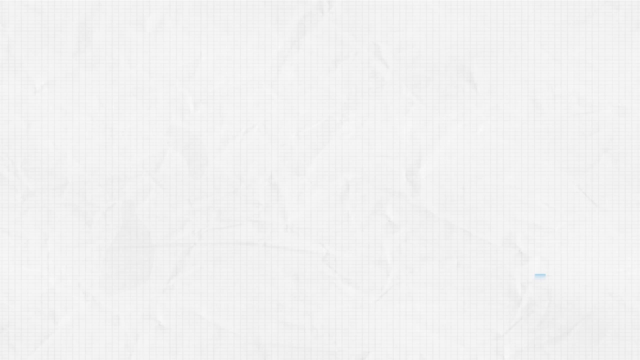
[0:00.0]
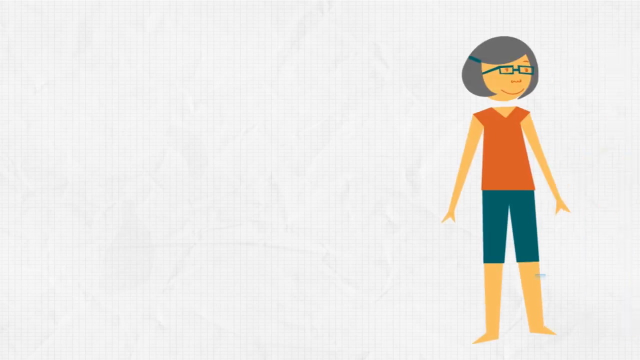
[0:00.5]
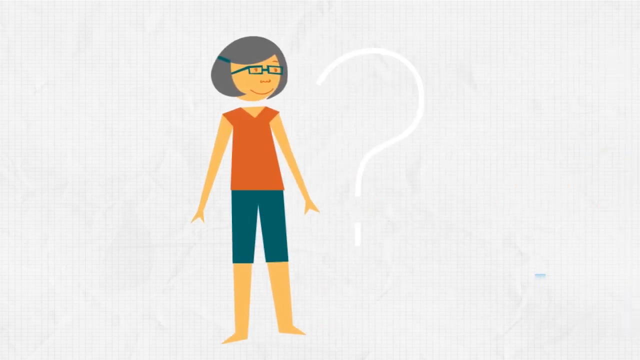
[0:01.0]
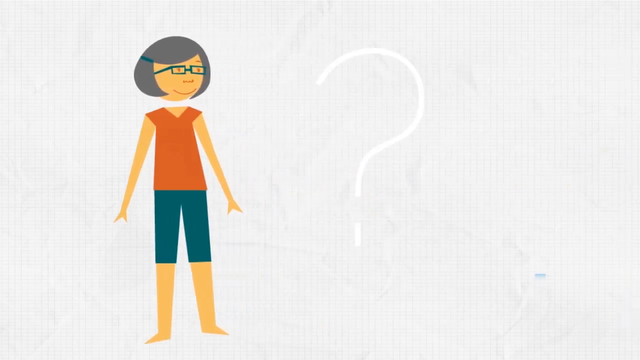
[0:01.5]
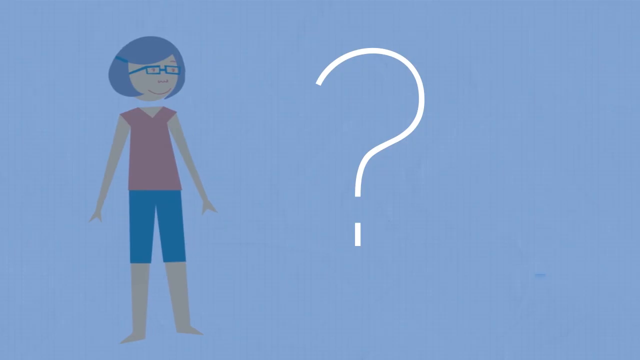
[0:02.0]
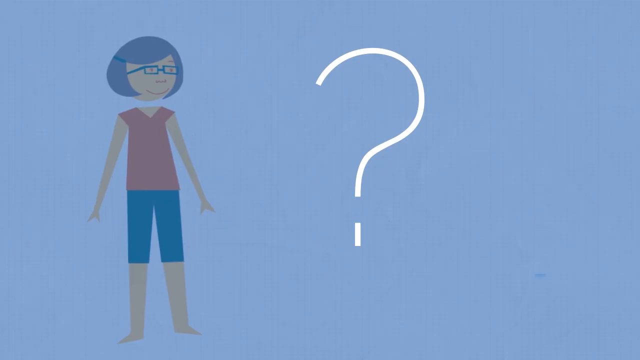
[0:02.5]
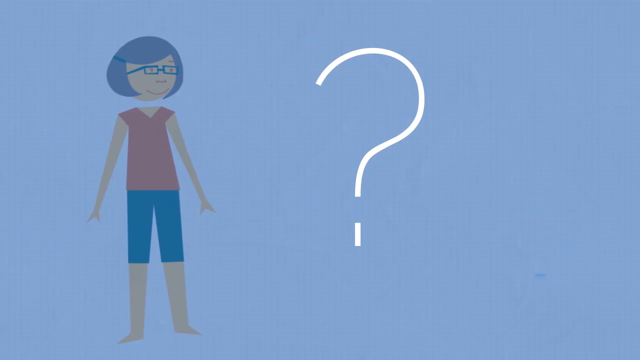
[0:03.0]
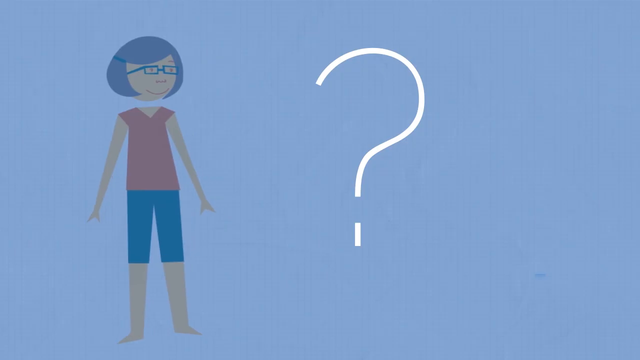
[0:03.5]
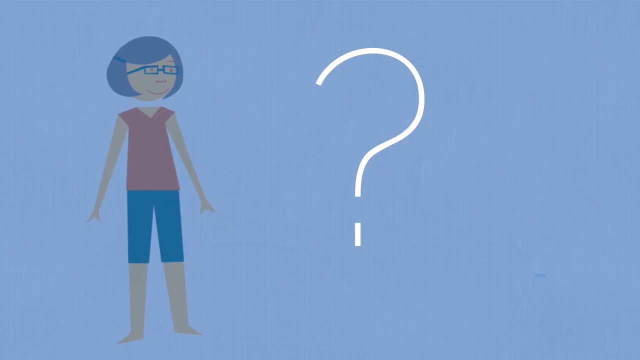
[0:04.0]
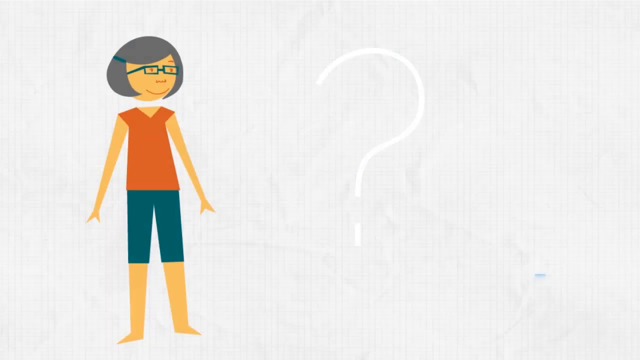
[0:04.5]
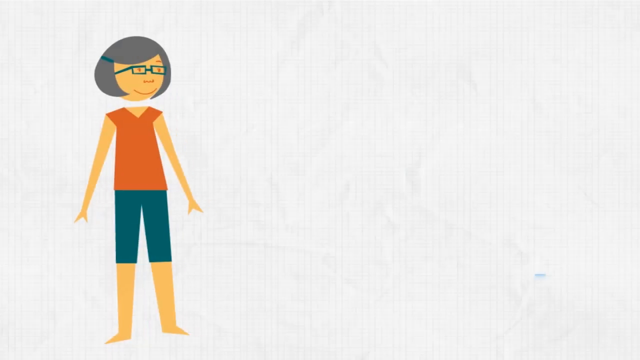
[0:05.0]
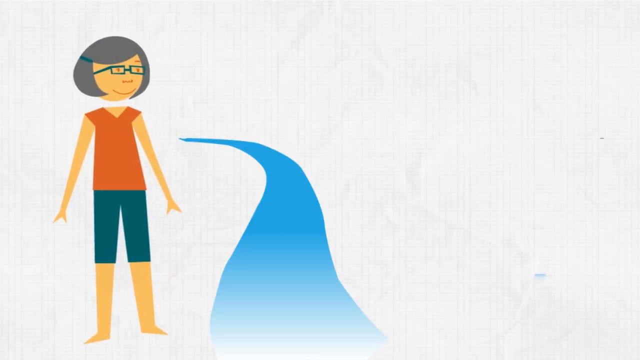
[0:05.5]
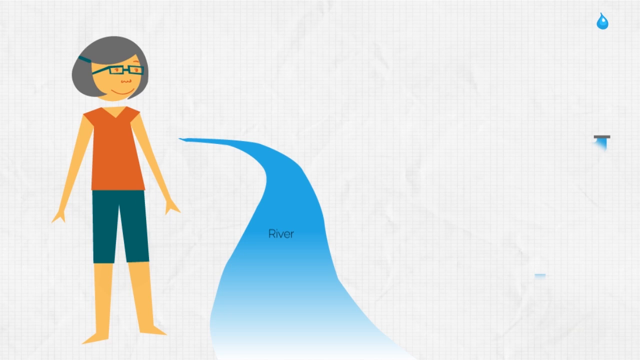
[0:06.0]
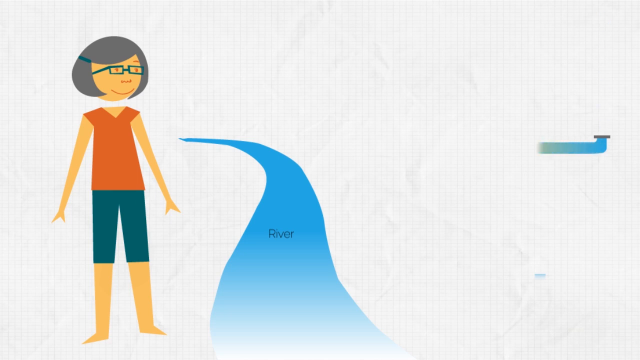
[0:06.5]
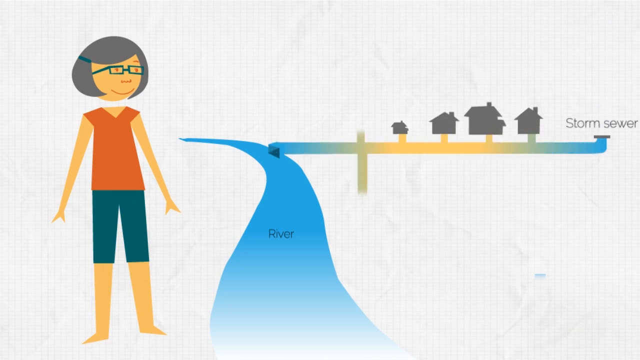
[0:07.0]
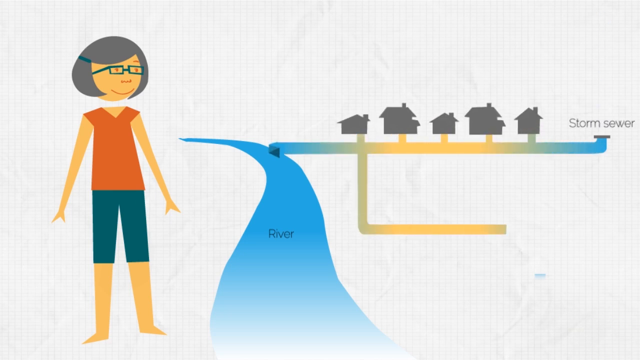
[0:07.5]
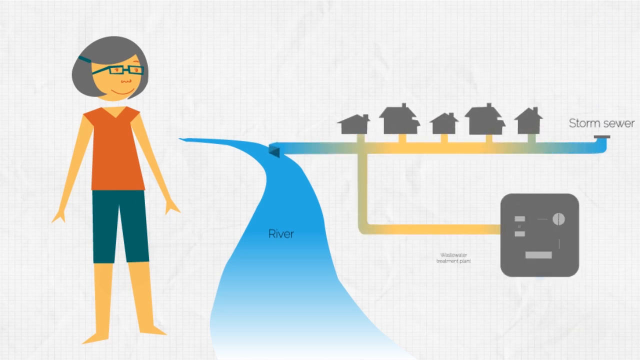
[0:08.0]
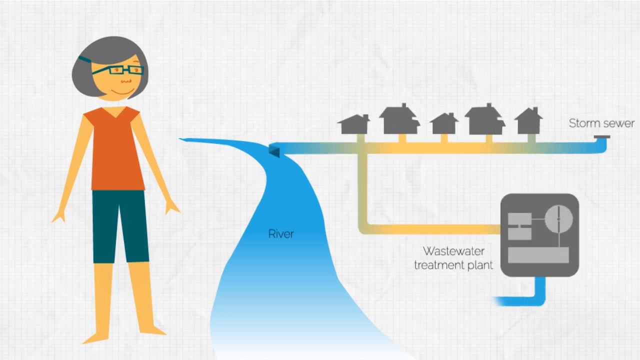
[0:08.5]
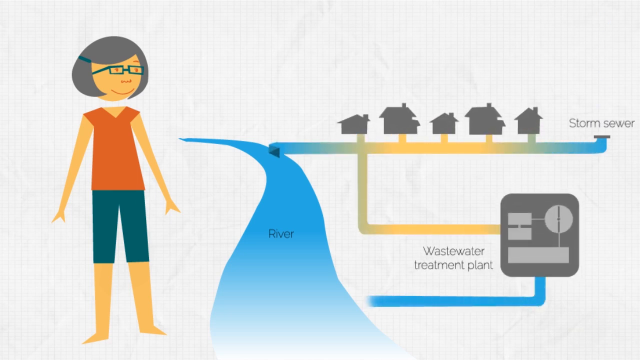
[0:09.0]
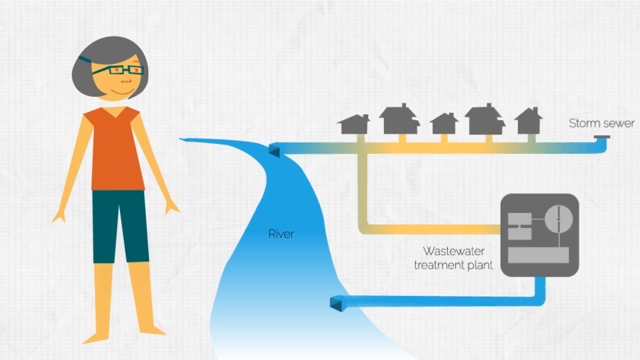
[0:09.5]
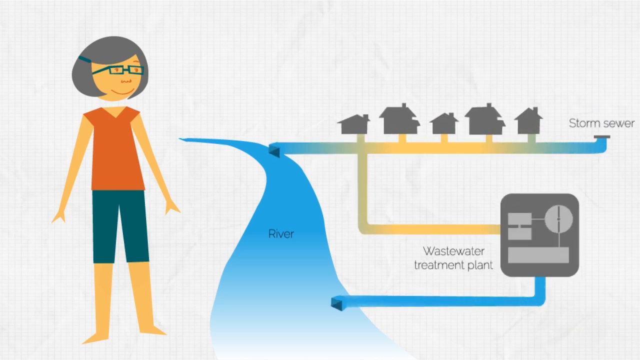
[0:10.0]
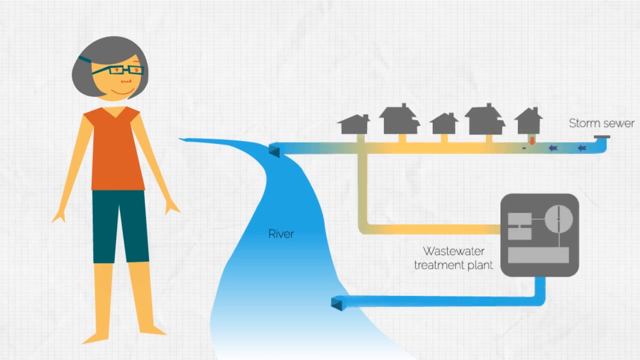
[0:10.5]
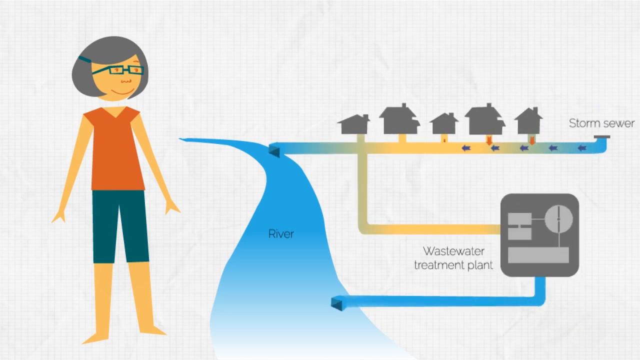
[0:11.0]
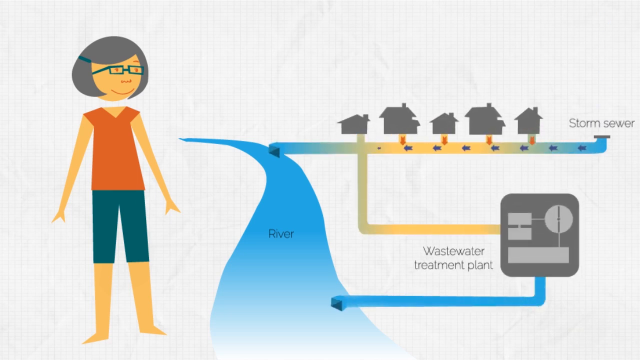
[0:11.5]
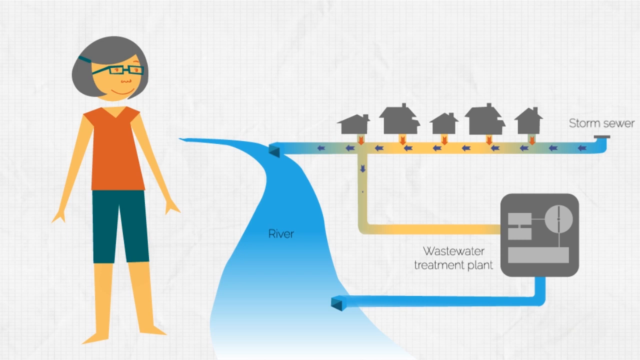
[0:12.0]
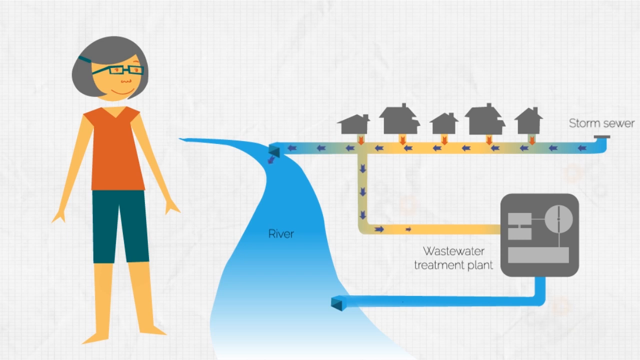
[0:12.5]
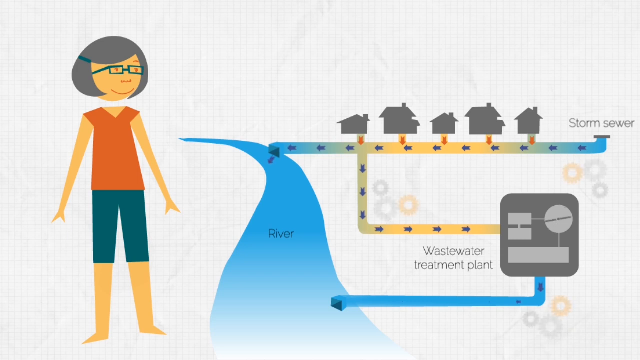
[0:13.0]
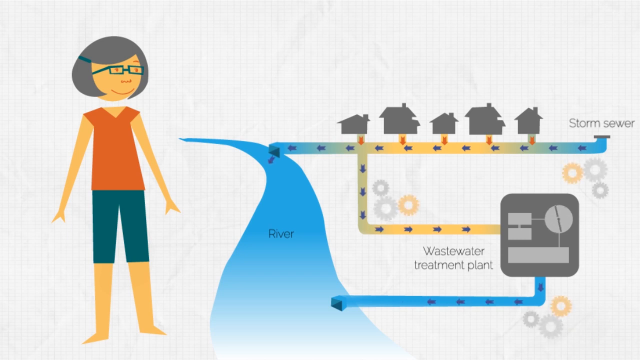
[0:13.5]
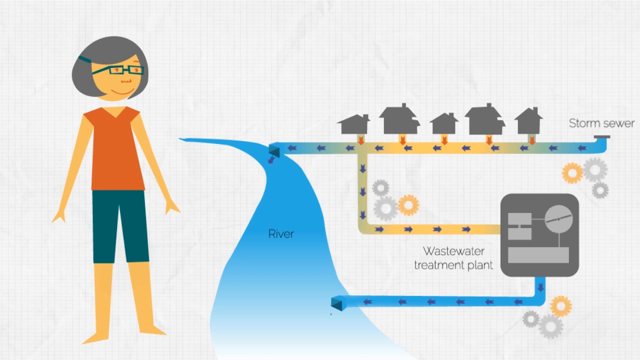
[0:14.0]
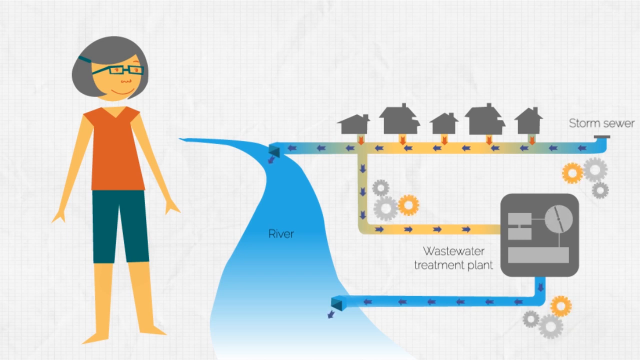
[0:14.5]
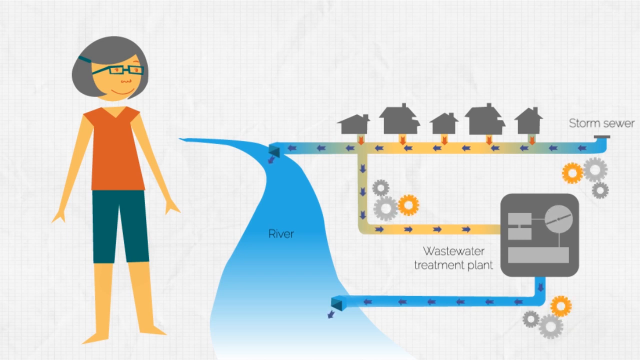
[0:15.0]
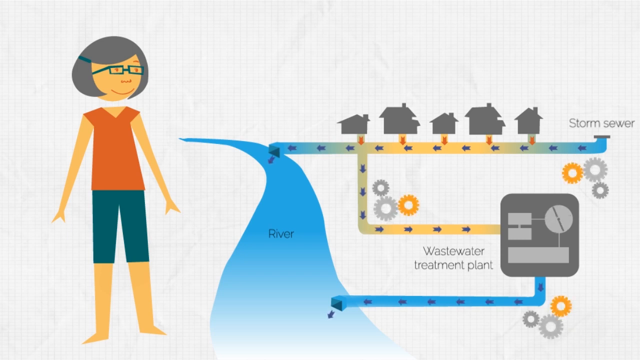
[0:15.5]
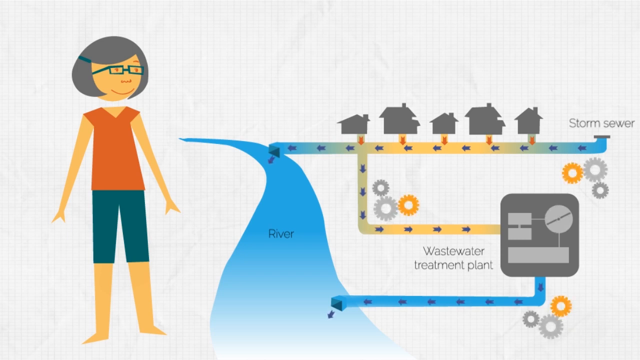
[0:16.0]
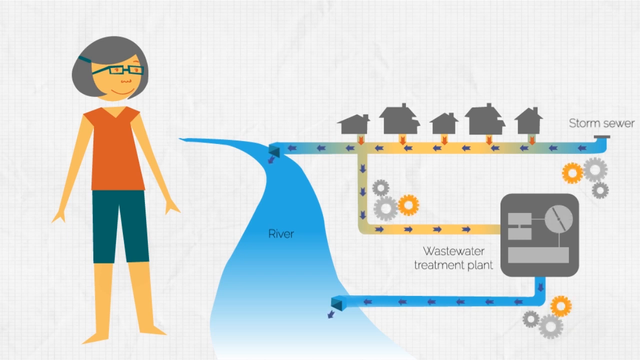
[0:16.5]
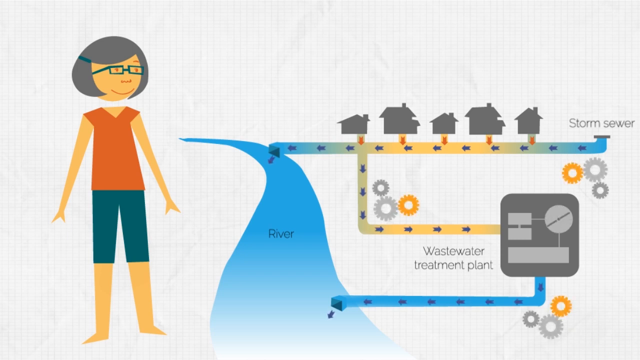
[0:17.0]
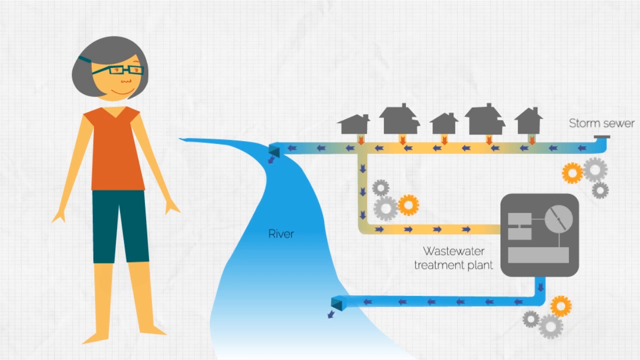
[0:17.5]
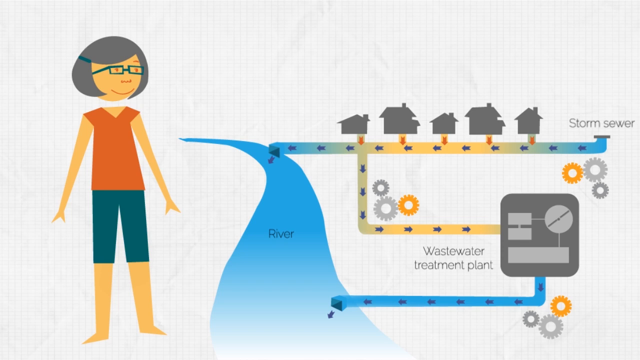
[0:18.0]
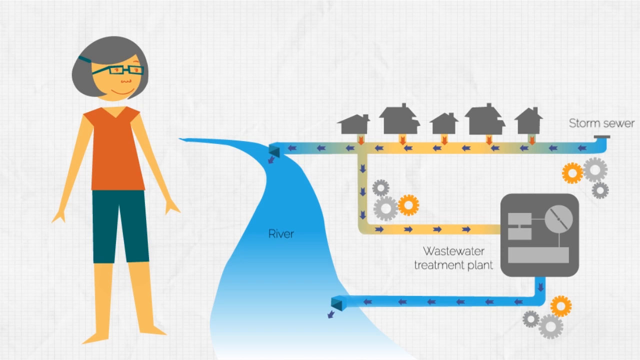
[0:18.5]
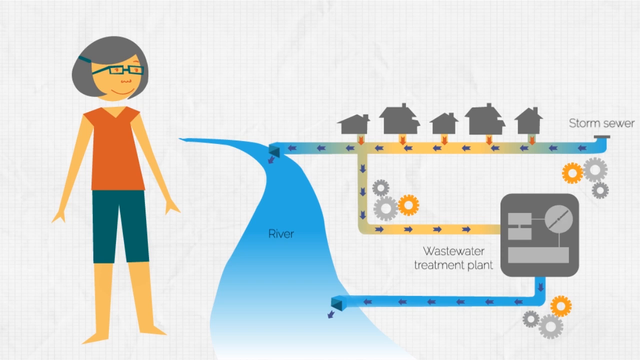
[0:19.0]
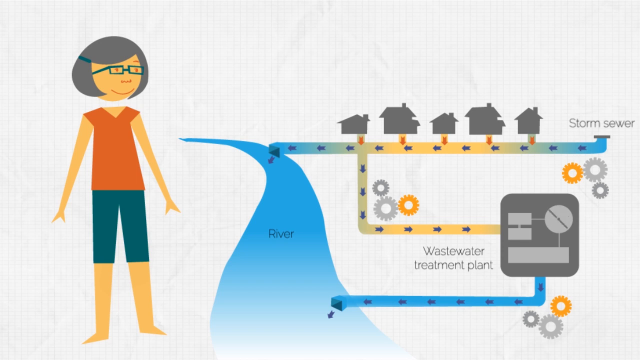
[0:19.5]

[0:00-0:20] The video opens with a cartoon illustration of a woman on a light blue background. She wears long blue Bermuda shorts and a red shirt with sort of cap sleeves, and she has blue glasses, a short bob curled under her chin, and side-swept bangs. She swipes over from the right to the left, the screen turns kind of bluish, and a large question mark appears. The blue shadow and the question mark then go away, leaving a white background with the woman on the left. A river, labeled "river", has come in to the right of her, and a diagram pops up, drawn in little by little. Five small outlined silhouettes of houses in dark gray are lined up at the top, to the right of the river. Underneath them runs a line, almost like a large pipe, labeled "storm sewer" at the far right; the pipe is kind of blue at the river, turns kind of yellowish in the middle, and is blue again where it says "storm sewer". Under the first house the pipe also goes straight down, light green, then to the right, yellow again, to a large gray square labeled "wastewater treatment plant", which has small lighter gray rectangles in a circle in its middle. A blue pipe goes down from the treatment plant, takes a hard left, and goes back into the river. Once the diagram is drawn, tiny black arrows start at the storm sewer and travel left beneath the houses, either into the river or, apparently, down to the wastewater treatment plant, following the whole pipe and returning to the river beneath the treatment plant. A knob in the upper right of the treatment plant square rotates, and the circle rotates.